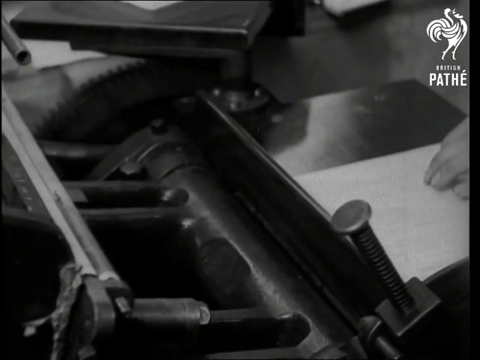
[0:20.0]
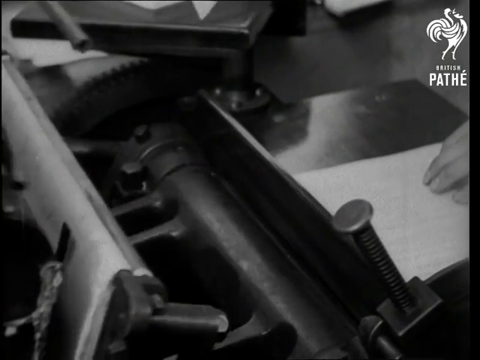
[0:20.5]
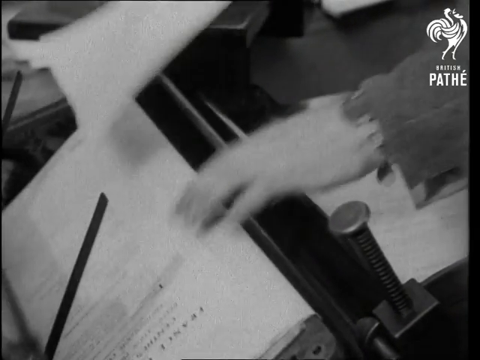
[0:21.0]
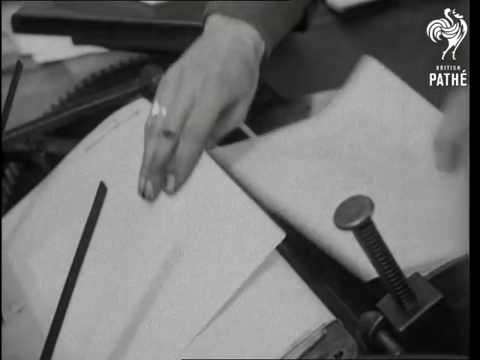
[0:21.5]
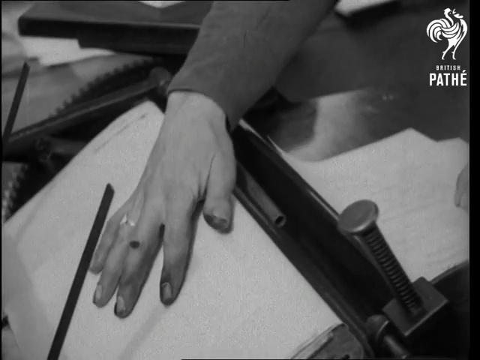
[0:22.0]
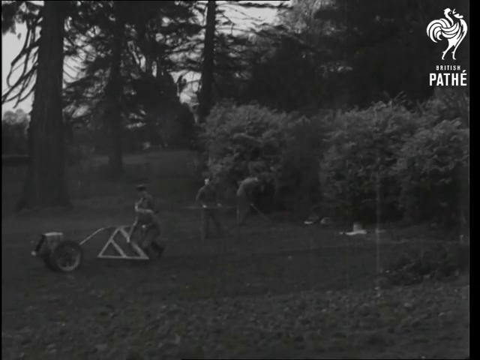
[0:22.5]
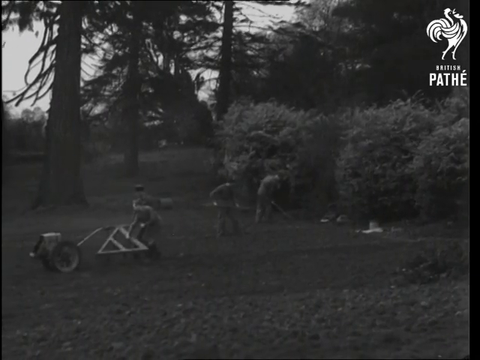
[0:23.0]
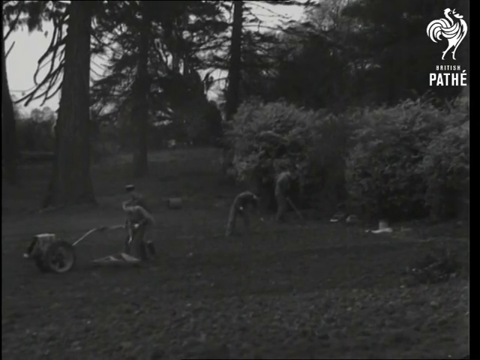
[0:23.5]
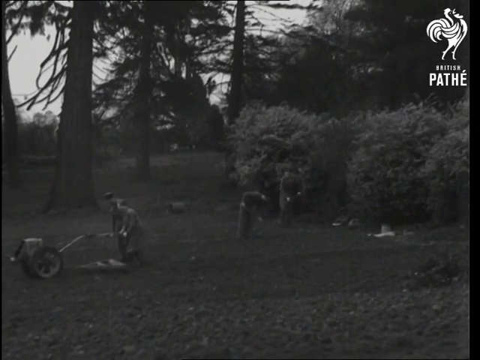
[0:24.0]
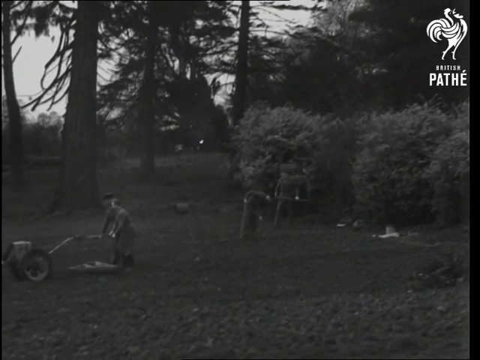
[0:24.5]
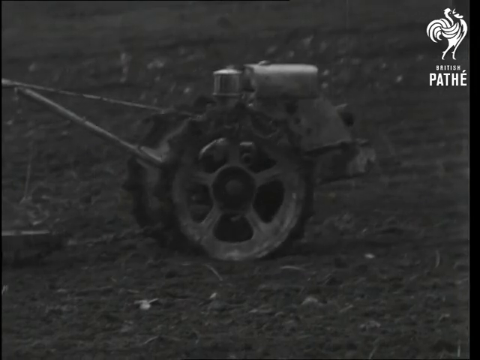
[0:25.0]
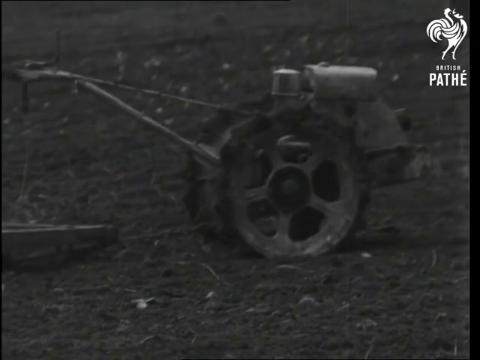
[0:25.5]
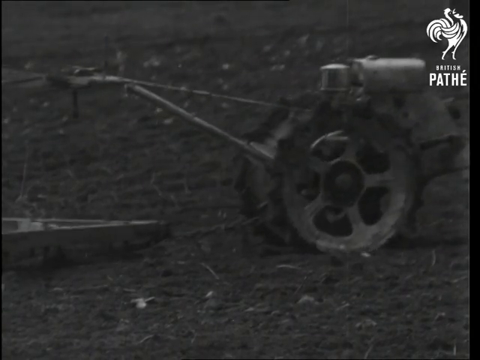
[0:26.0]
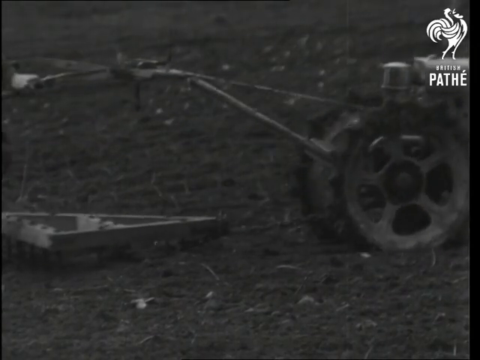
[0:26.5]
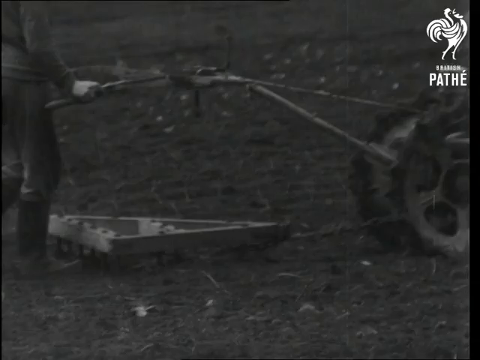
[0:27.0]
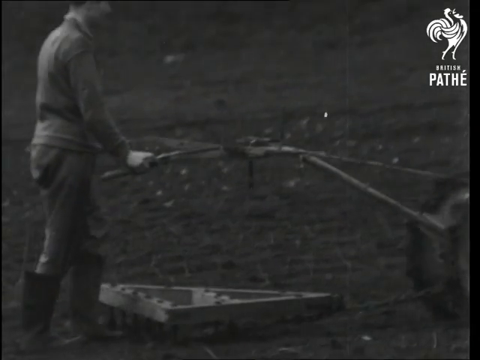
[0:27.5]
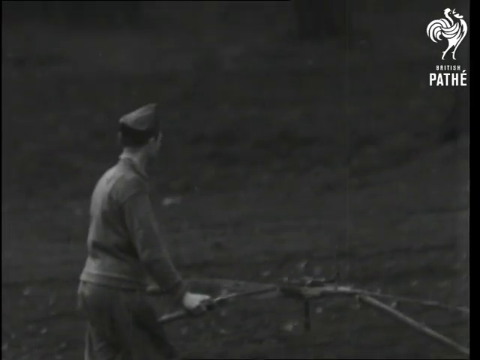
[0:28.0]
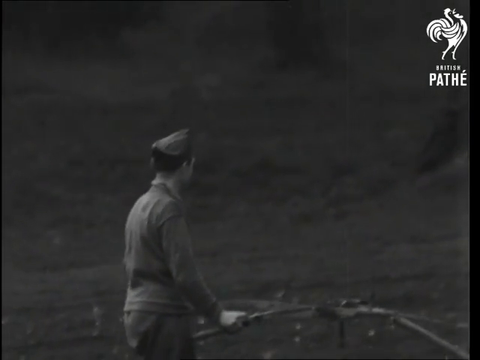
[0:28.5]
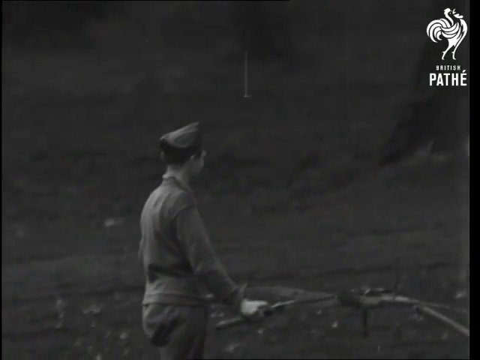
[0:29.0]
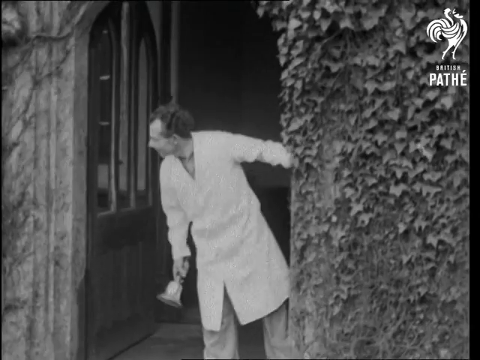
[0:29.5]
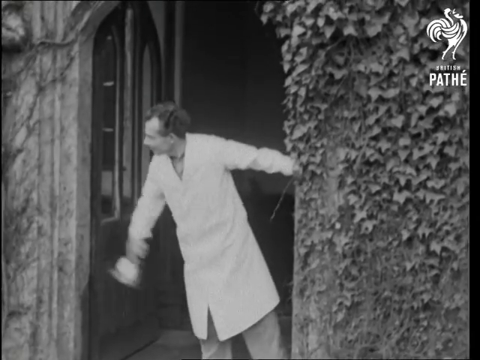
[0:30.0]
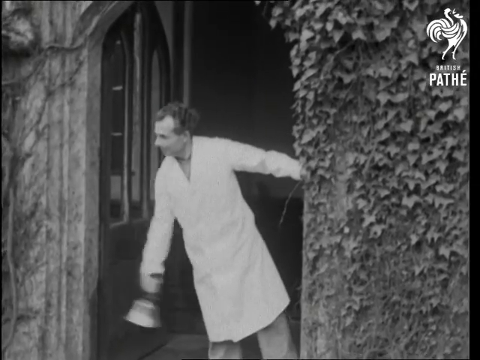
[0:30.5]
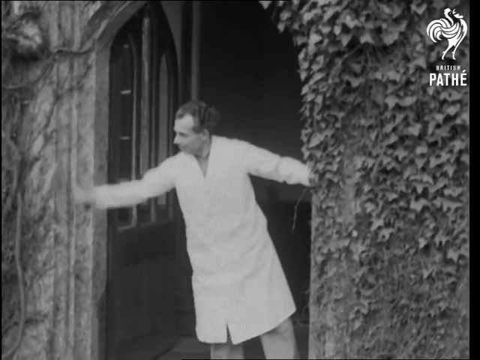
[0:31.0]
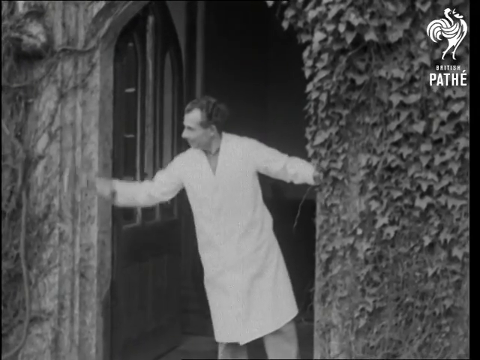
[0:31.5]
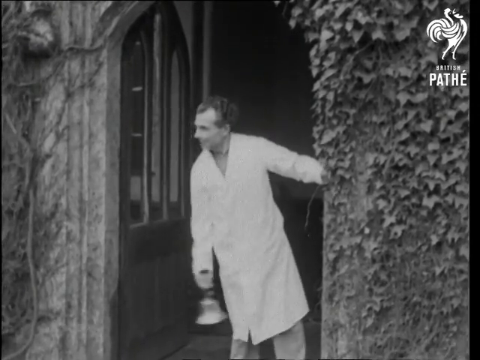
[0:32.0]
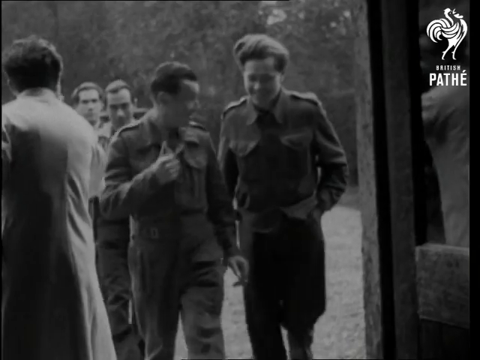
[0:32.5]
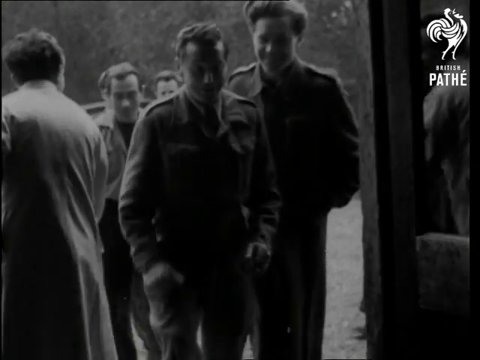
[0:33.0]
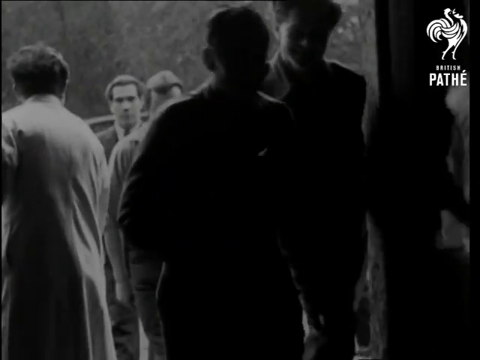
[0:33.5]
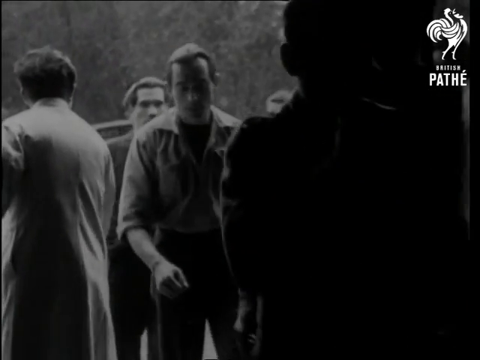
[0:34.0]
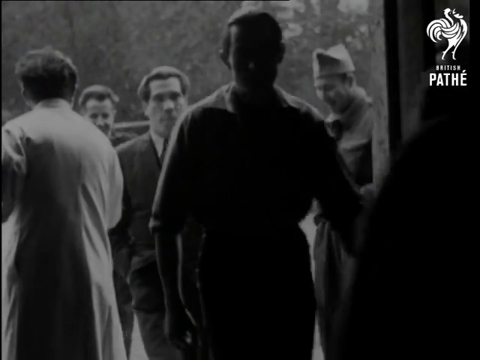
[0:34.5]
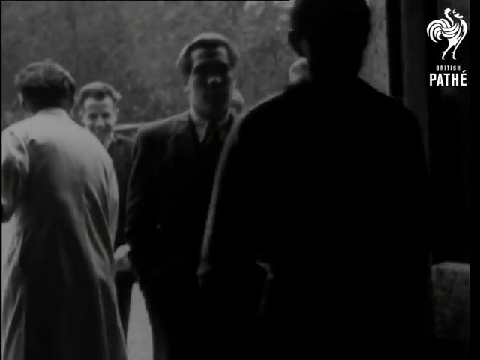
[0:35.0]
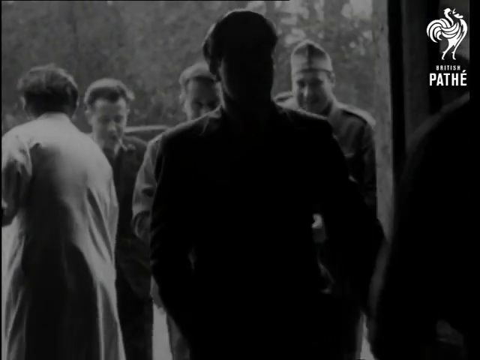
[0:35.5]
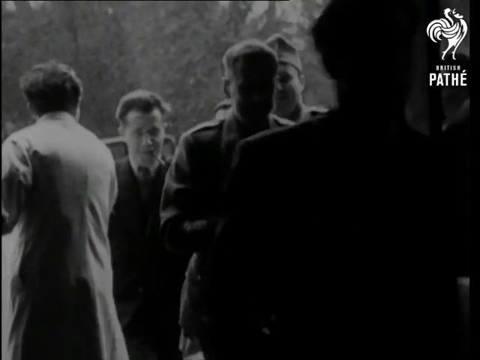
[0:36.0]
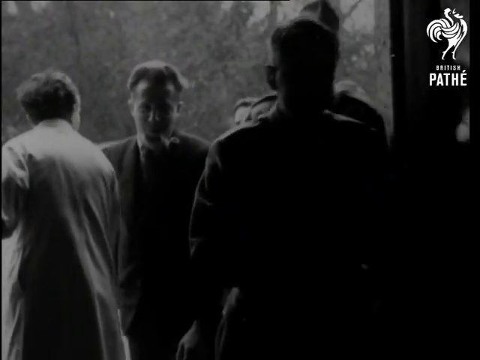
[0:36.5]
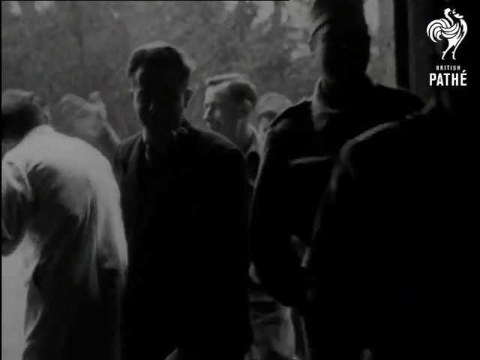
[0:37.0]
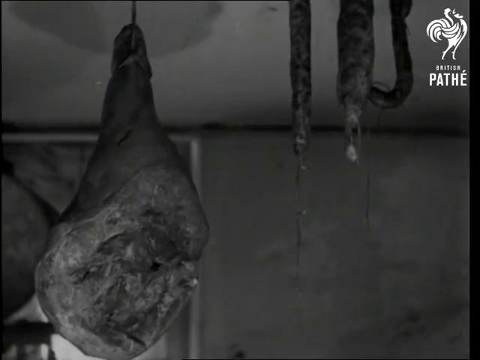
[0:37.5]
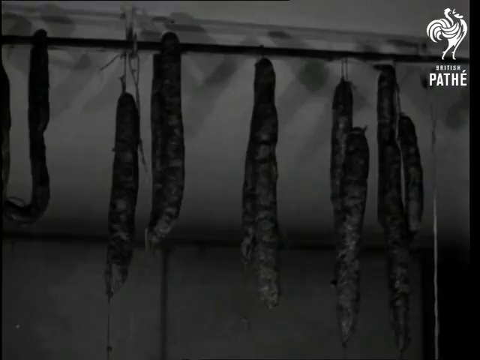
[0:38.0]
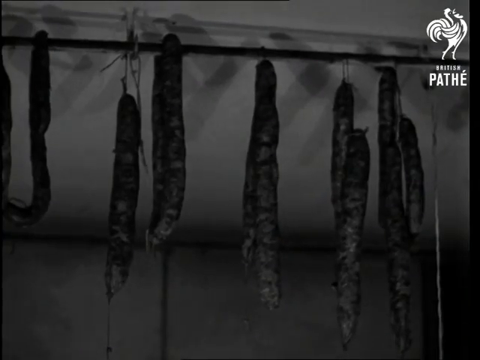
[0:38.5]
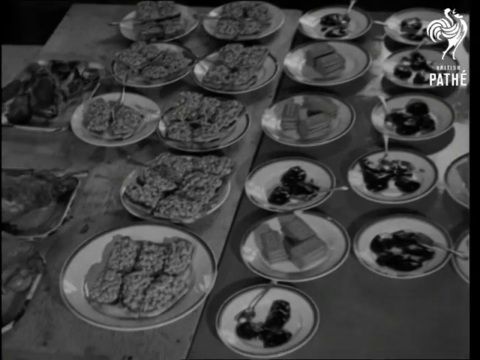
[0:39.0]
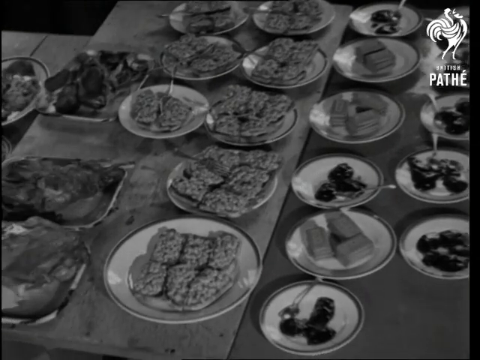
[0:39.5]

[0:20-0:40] The press is at work. A hand removes a piece of paper and then feeds the press a new sheet. Four men then work in a field using some type of lawn or farming device. The device has two wheels and is operated by a single individual, with some type of plow mechanism connected to it. Next, a man in a large white lab coat rings a bell while hanging out of a door. Multiple people smile and communicate as they walk through a doorway; most are dressed in nice clothing, including suits. Various meats are then shown hung from the ceiling, followed by a table full of multiple different desserts. The footage is in black and white throughout.